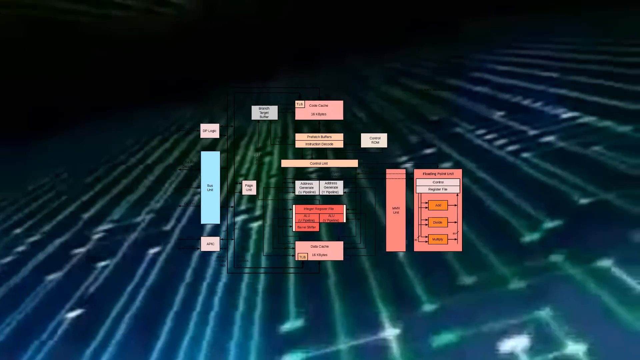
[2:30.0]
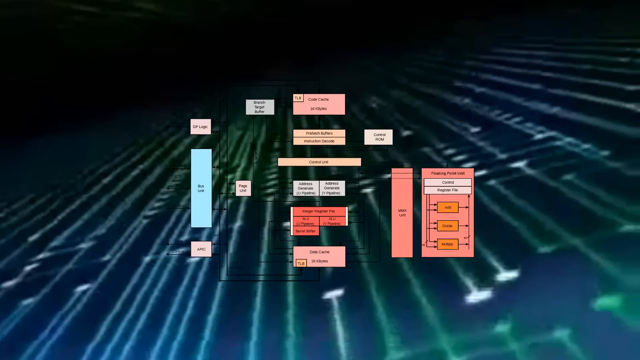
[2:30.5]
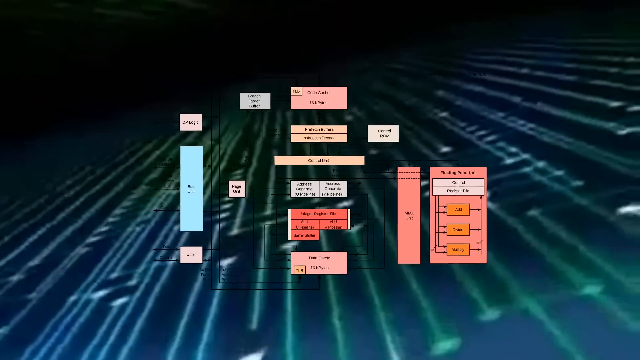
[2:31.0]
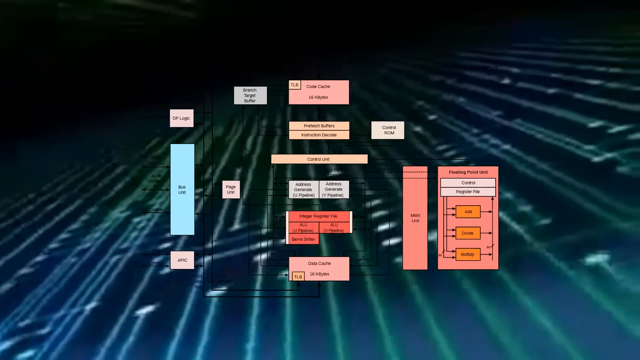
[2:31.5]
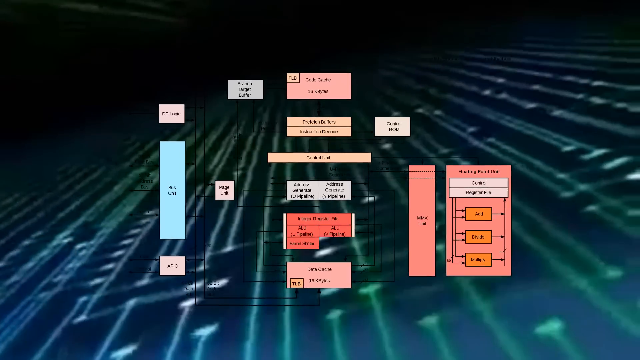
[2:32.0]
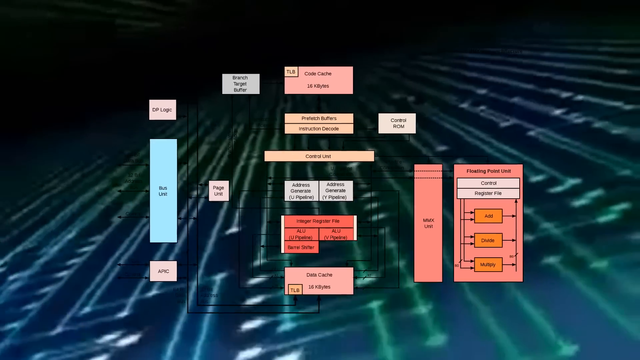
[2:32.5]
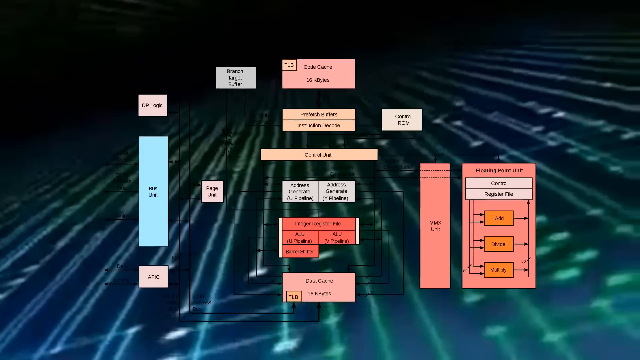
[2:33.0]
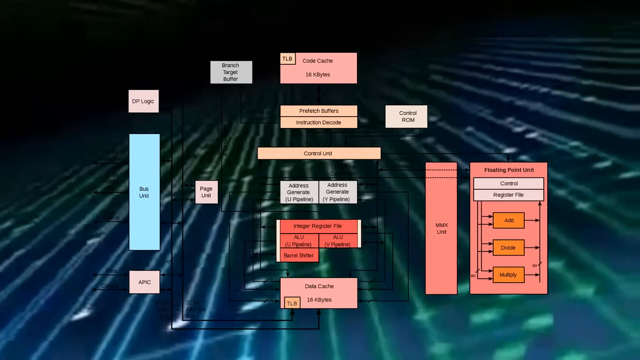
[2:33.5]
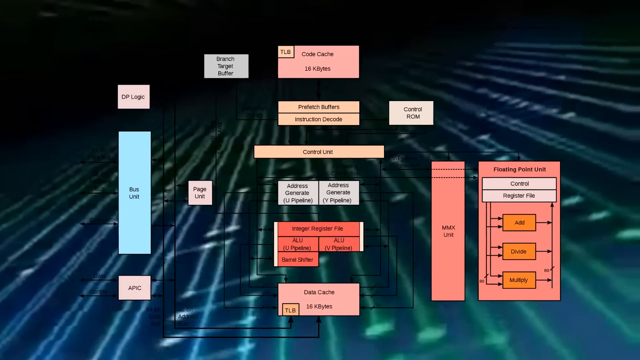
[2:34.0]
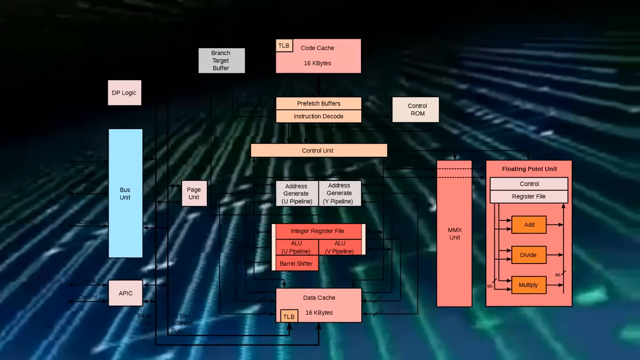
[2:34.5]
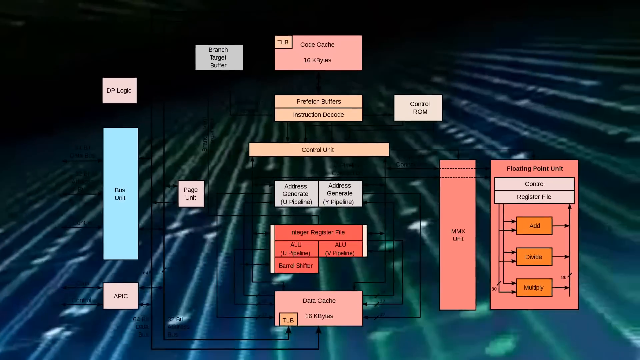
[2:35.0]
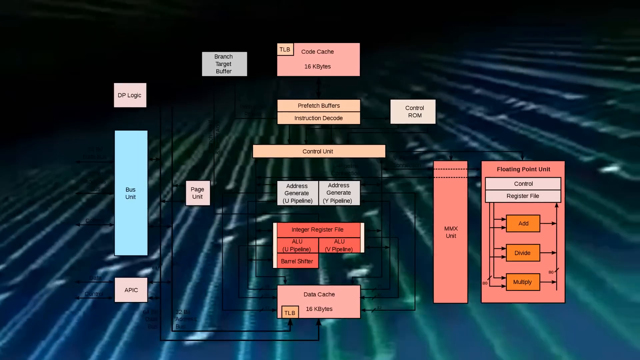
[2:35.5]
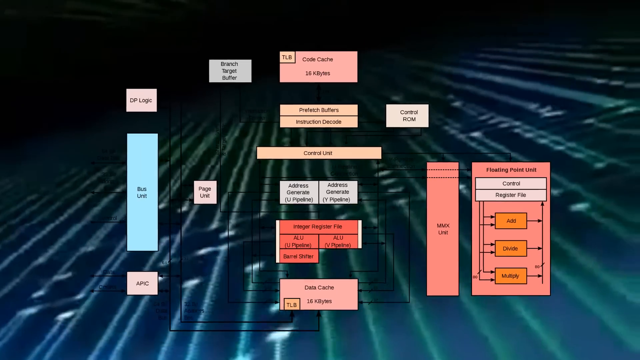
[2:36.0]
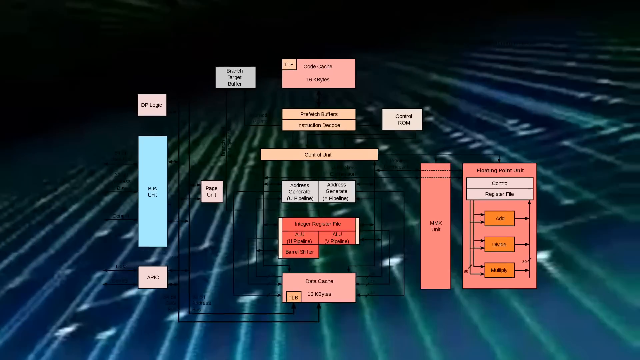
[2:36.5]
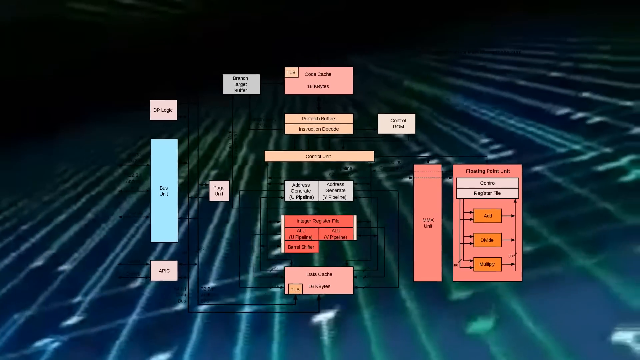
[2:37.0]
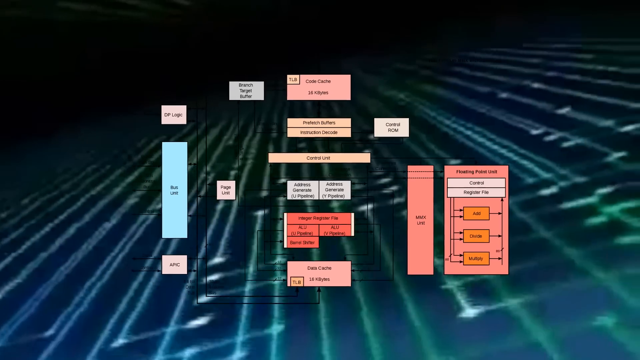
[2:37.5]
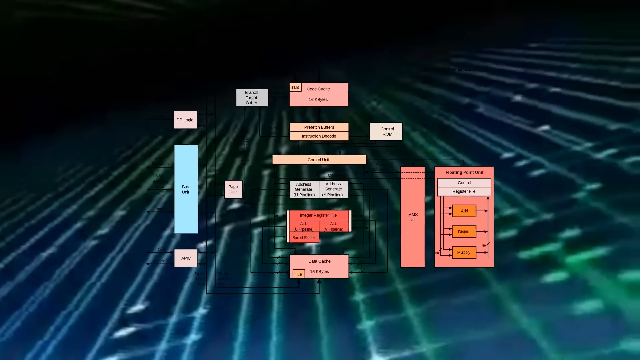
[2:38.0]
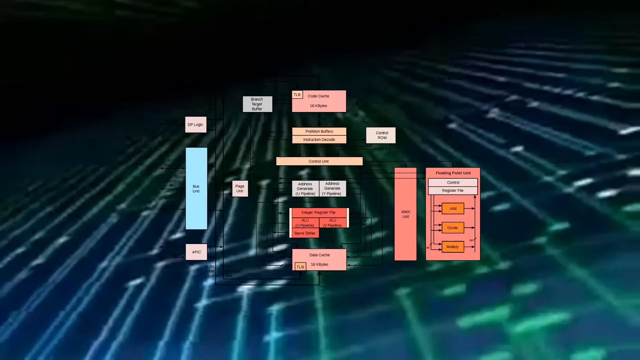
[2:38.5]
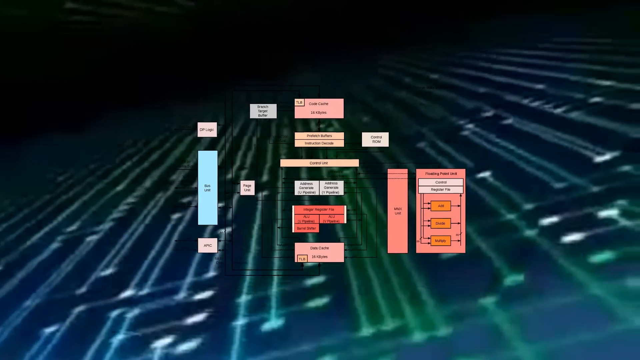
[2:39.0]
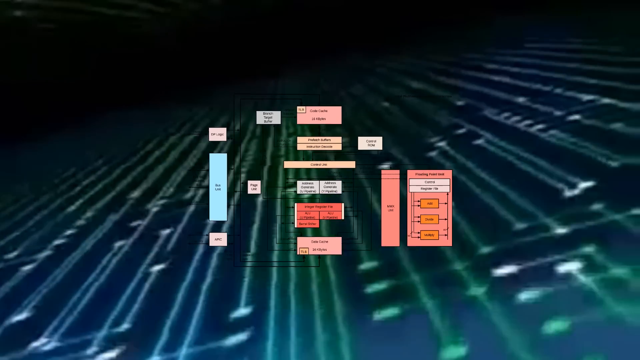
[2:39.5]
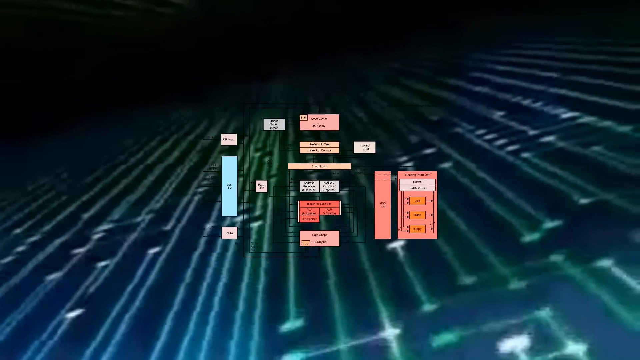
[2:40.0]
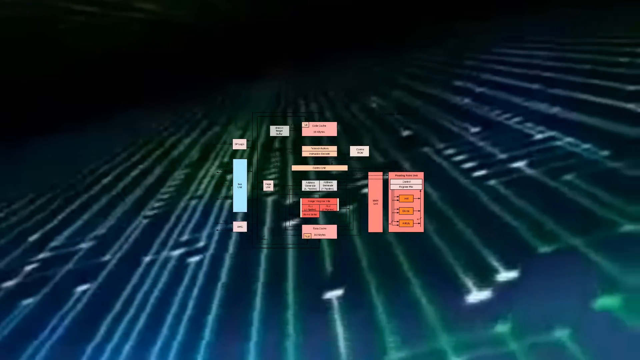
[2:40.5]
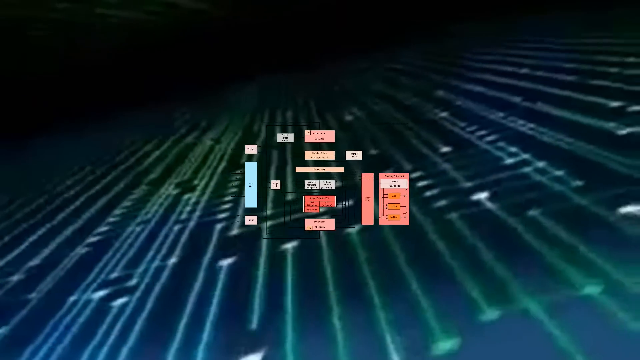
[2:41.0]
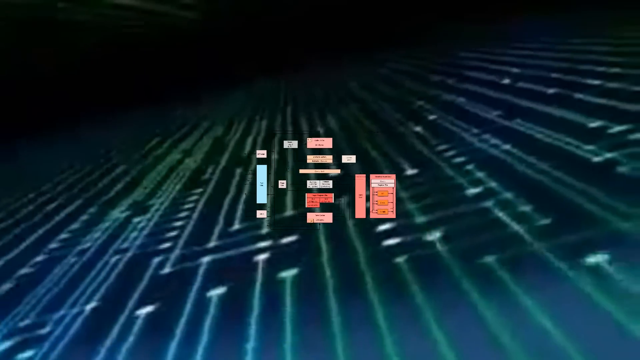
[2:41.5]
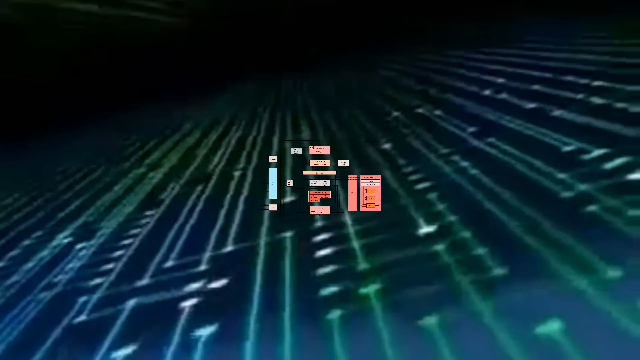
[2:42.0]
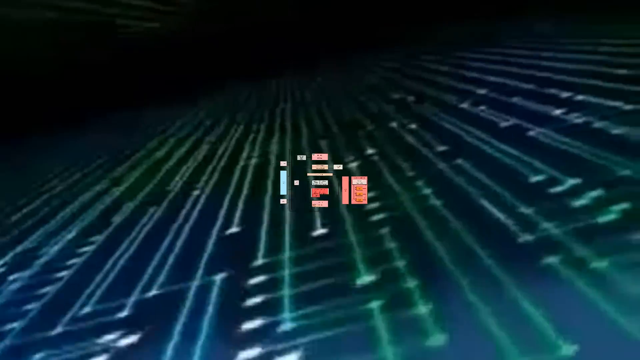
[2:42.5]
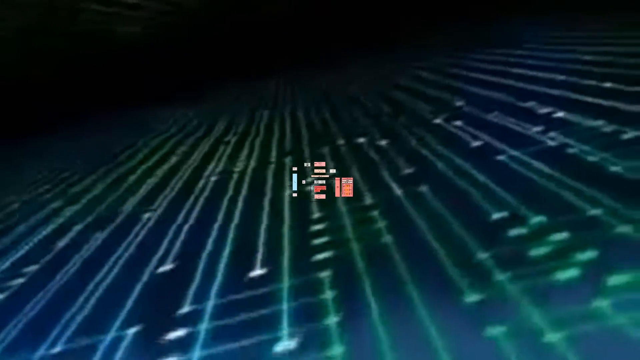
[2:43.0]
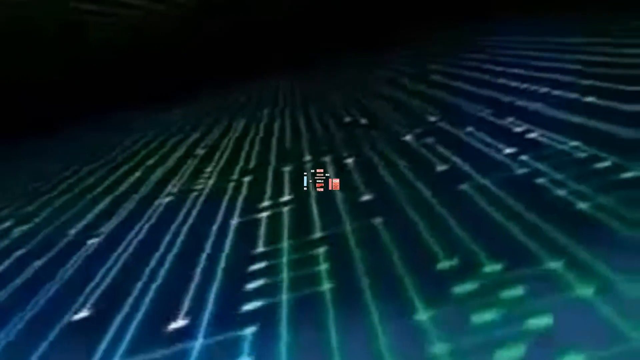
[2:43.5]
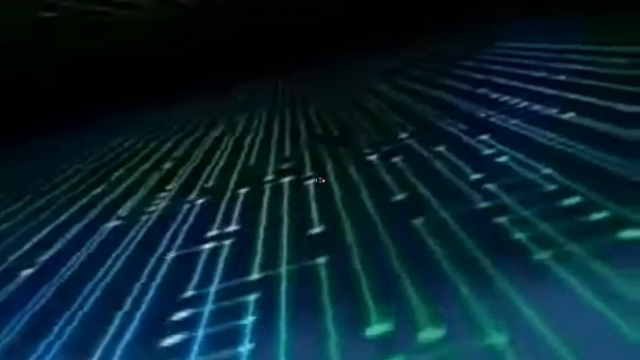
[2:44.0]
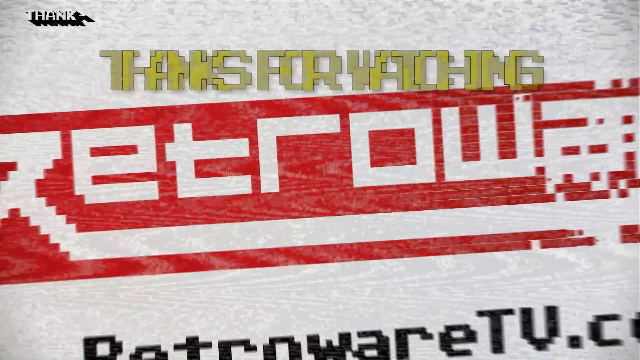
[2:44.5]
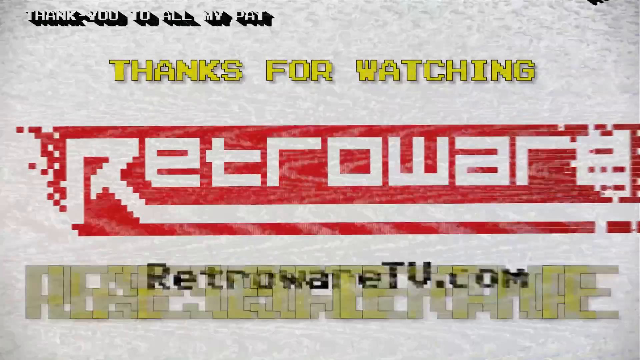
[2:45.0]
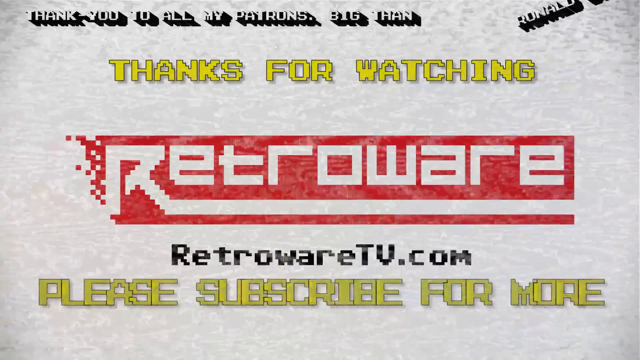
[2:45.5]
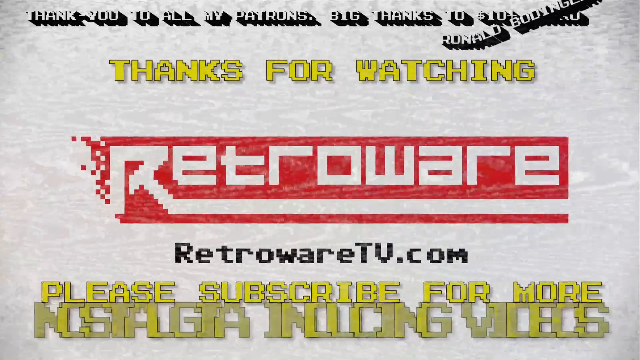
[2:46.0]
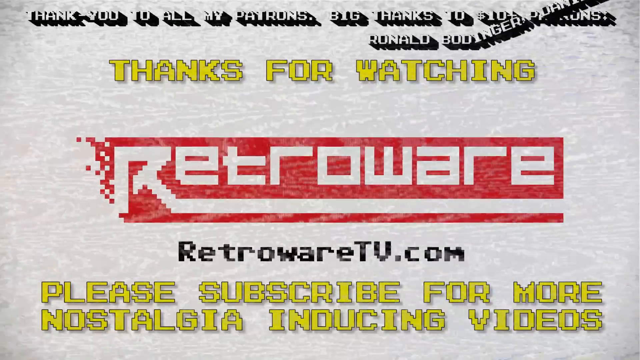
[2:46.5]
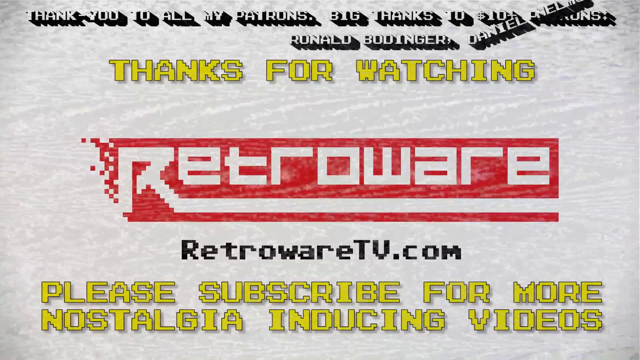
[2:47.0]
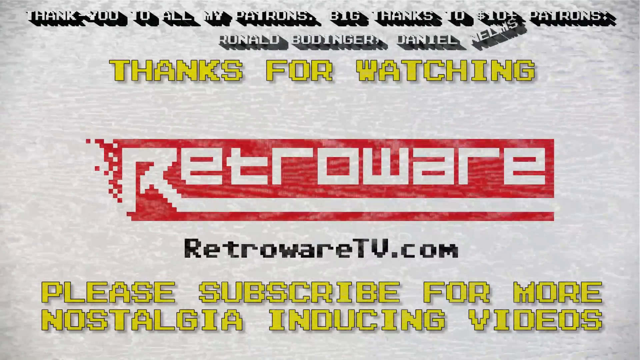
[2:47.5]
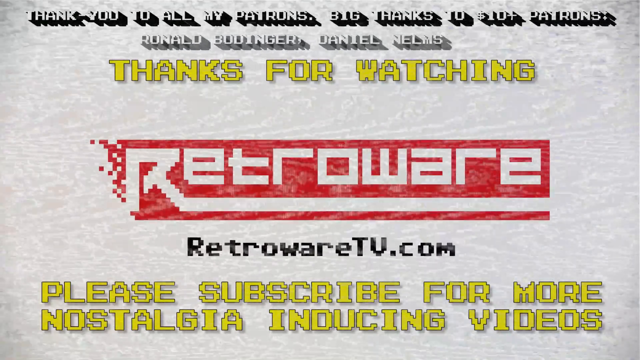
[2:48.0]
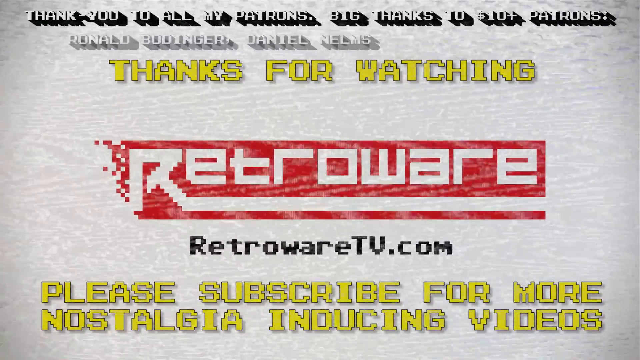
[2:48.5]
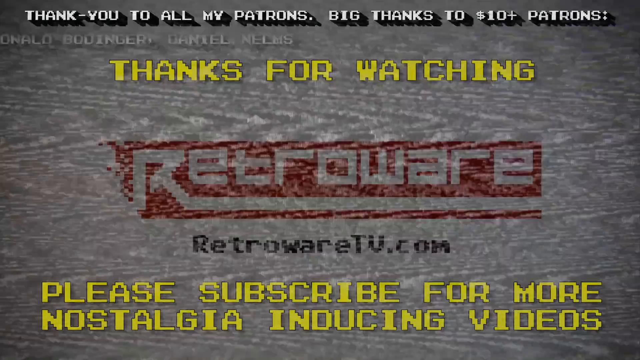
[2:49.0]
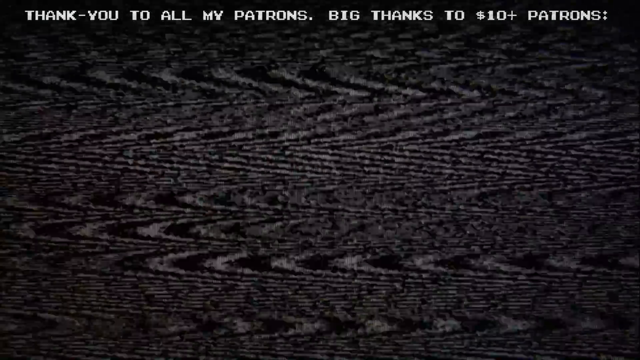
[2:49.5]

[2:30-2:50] On the digital background, a display comes up made of many small individual boxes, squares and rectangles connected by lines with arrows, each labeled with something inside that is hard to make out. The image moves closer to the screen and then backs away, showing colors including coral pink, orange, white, light blue and light orange, until it sort of fades far away. A screen with a blurry background then says "thank you to all my patrons" and "big thank you to Ronald Budinger Daniel Nimitz," and in yellow "thank you for watching." A logo with a red background appears along with "retro wear" and "retro wear tv.com," and the text "please subscribe for more nostalgia inducing videos."